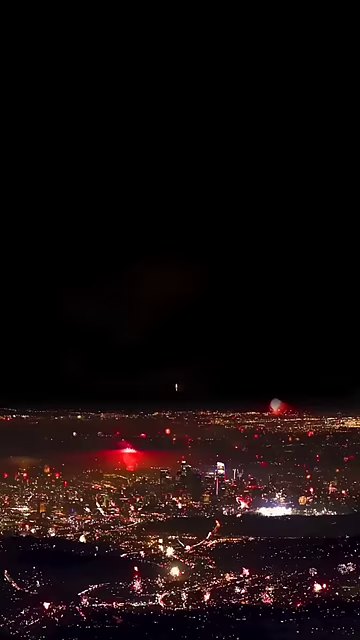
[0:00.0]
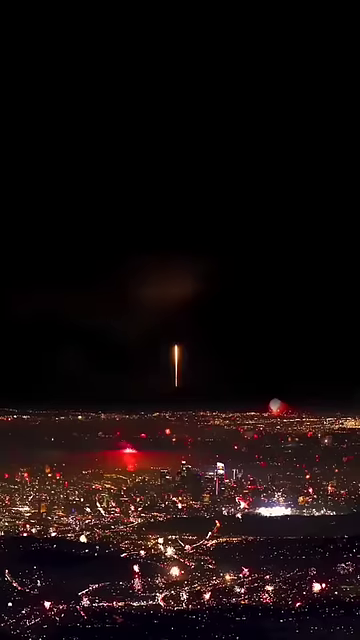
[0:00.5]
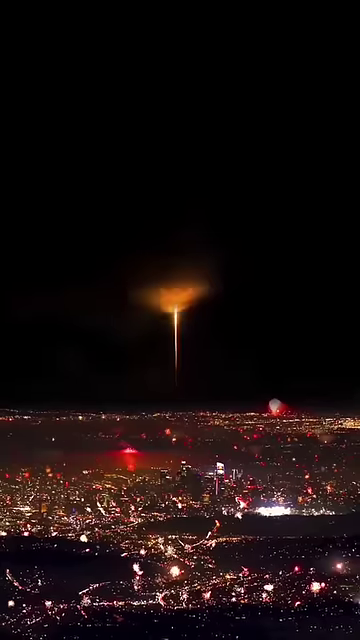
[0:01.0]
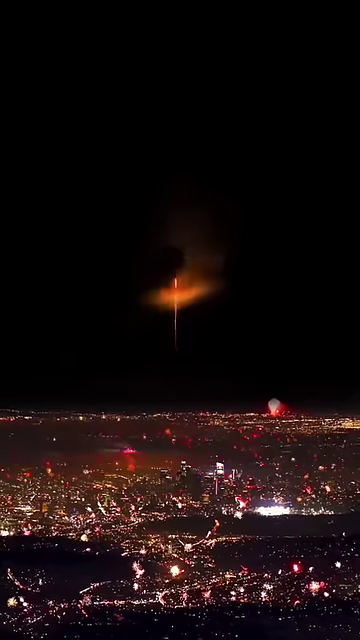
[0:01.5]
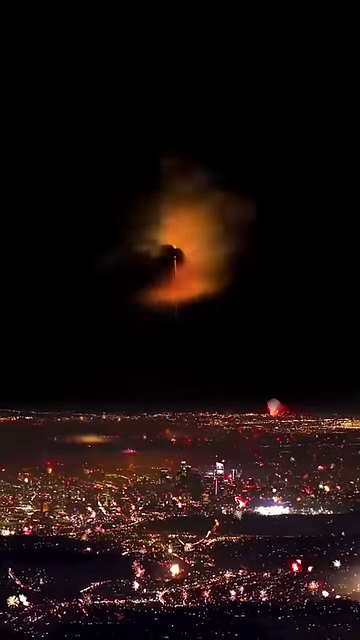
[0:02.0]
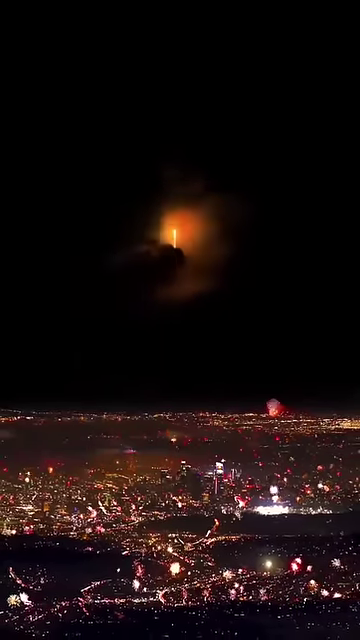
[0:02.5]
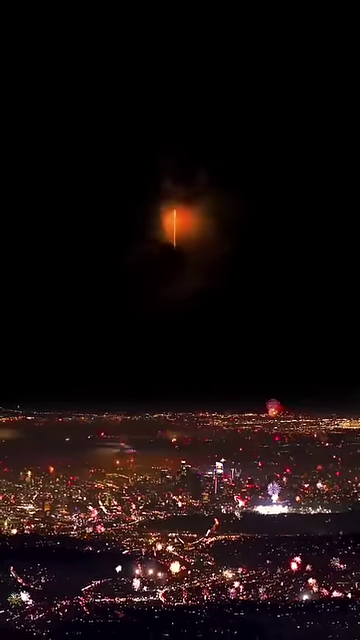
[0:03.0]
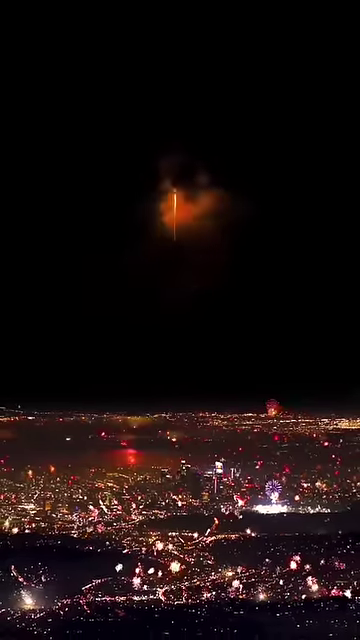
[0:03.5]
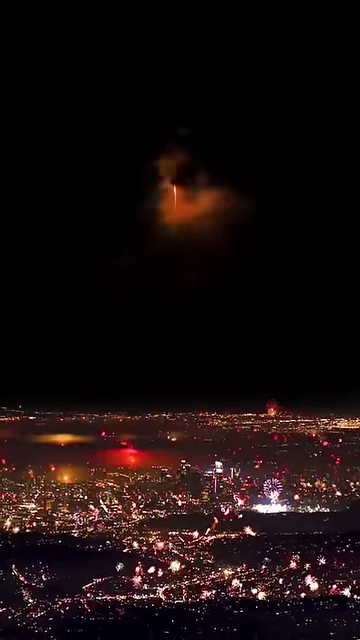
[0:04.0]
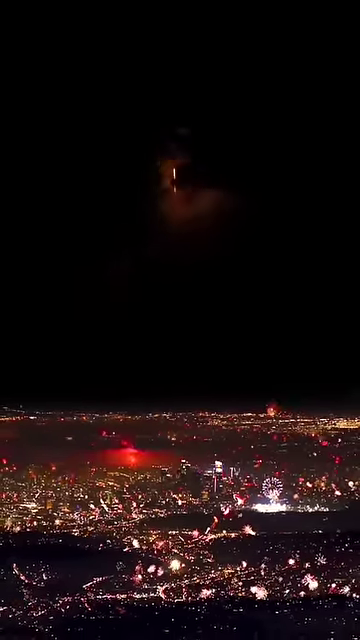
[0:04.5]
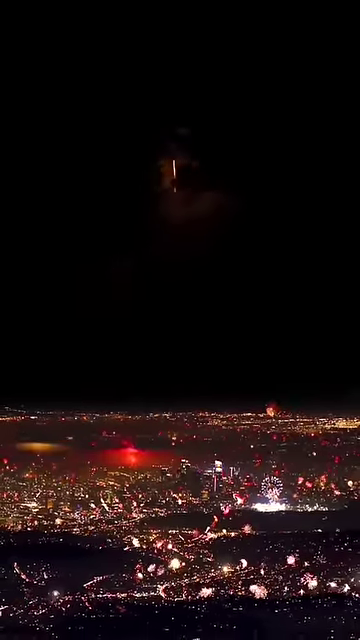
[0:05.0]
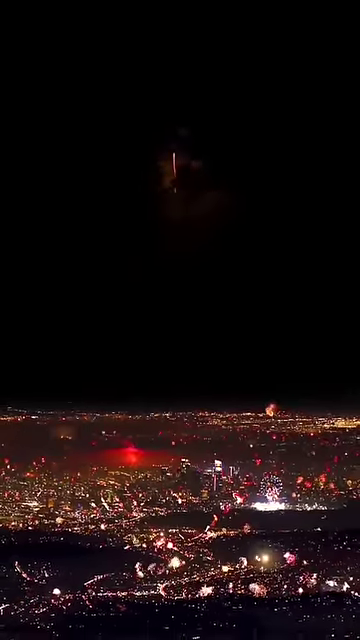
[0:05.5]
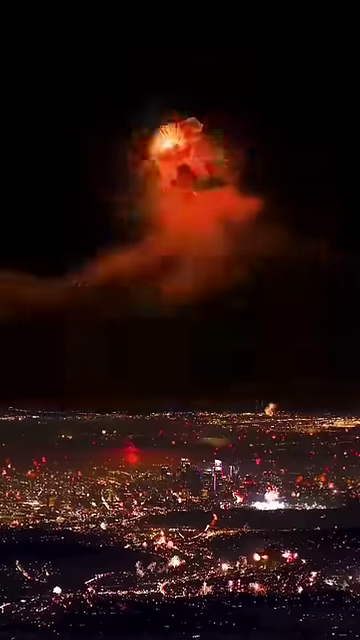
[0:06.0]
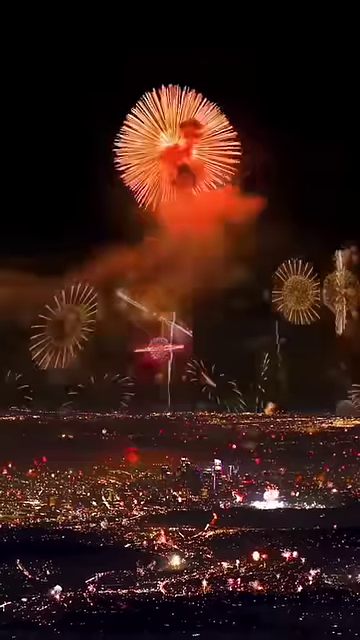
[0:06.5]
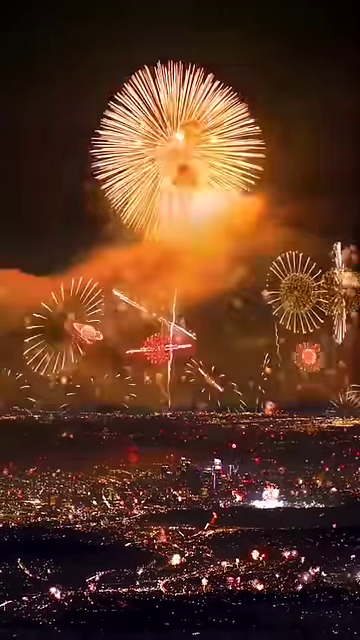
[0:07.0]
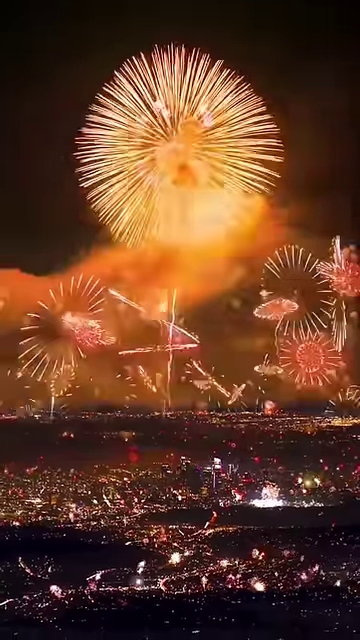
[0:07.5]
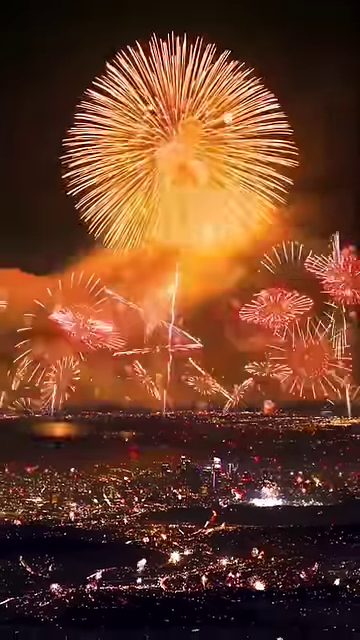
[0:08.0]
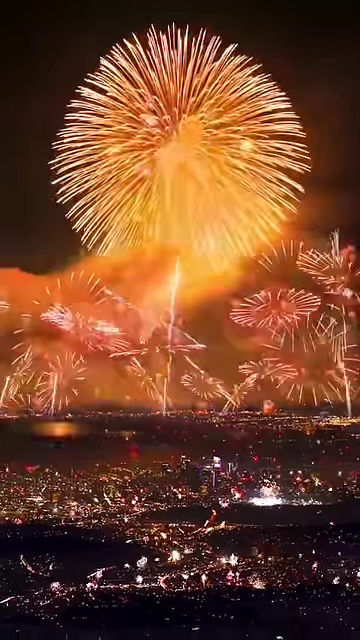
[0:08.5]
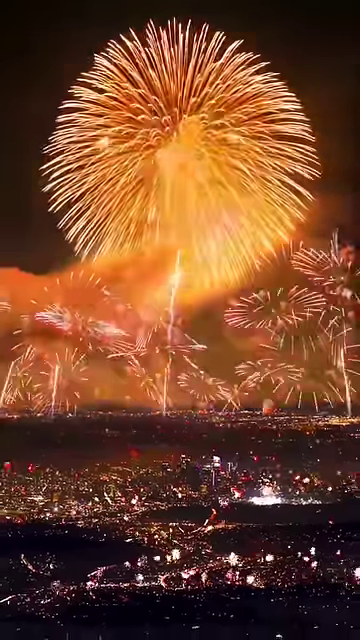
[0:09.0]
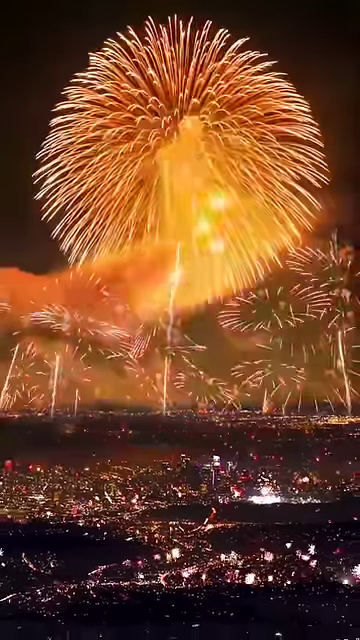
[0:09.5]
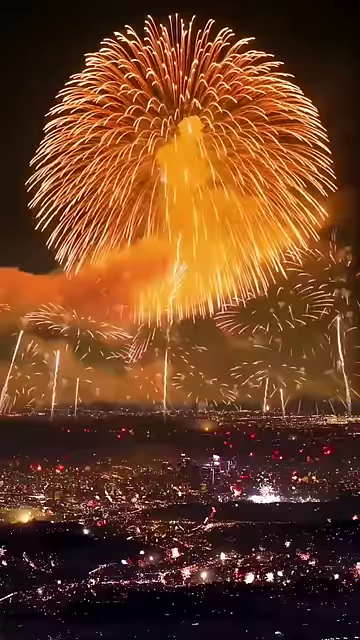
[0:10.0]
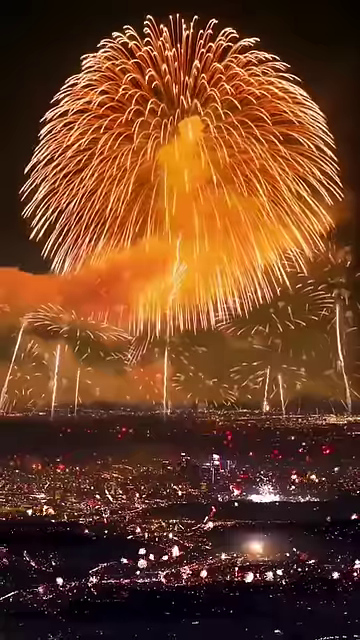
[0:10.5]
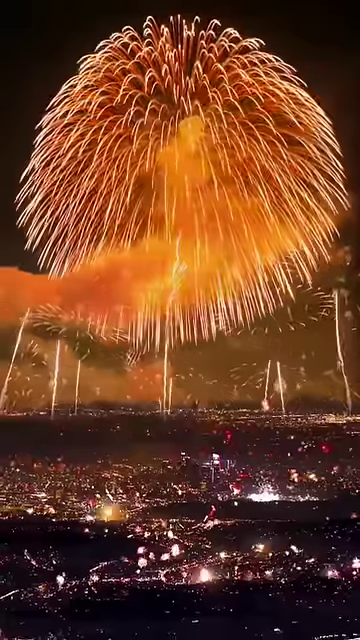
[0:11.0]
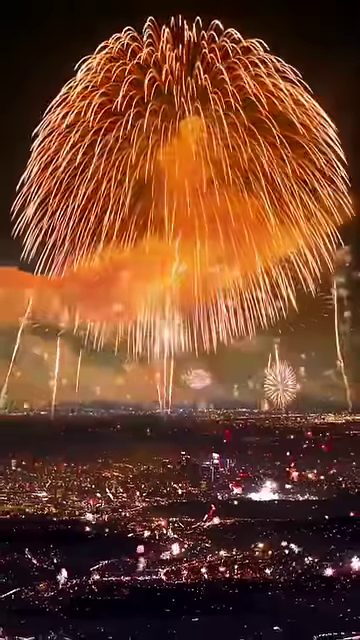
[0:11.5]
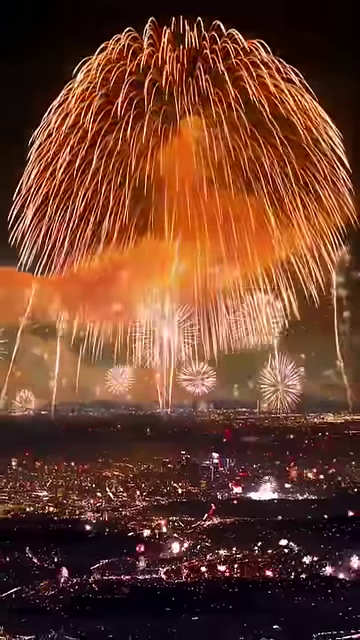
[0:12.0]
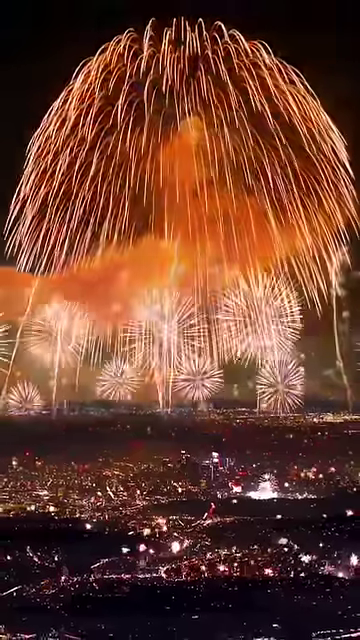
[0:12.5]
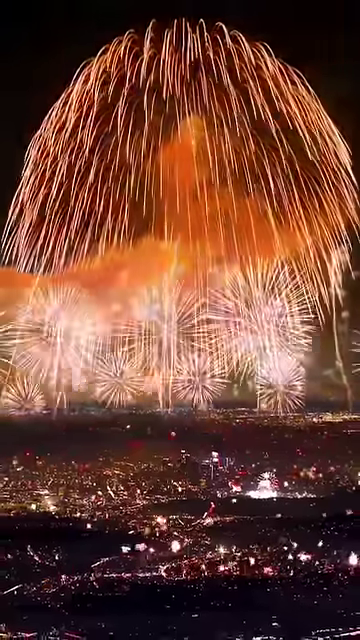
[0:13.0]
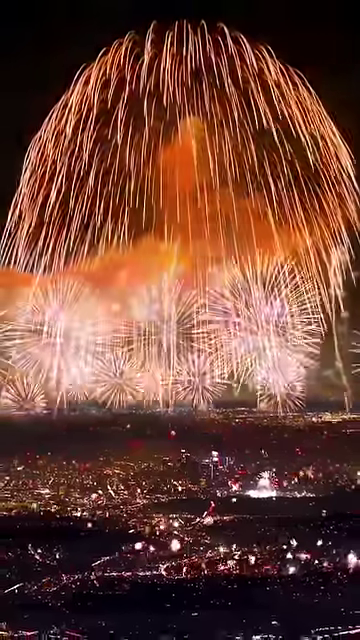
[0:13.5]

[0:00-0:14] On-screen text reads "Diwali status sky shot status" alongside two fireworks emojis. The view is apparently over a huge city, a big cityscape full of lit-up buildings. A huge orange light goes up into the sky, followed by a huge fireworks display. The biggest firework is a circular, kind of weeping-willow-style burst that goes the highest, while underneath it many other fireworks sort of explode at the same time. A second wave of fireworks goes off while the biggest one is still falling. The fireworks are all very orangey, sort of gold, orange and white, in warm tones, with no blue, purple or green. The city is presumably a big Indian city and the display is presumably part of a Diwali celebration, though the specific city is not identified. The shot is aerial-looking over the city, and it is unclear whether it is drone footage or taken from a big lookout point. No people are visible, only the city; the buildings look very small and the fireworks look huge, giving a massive sense of scale.